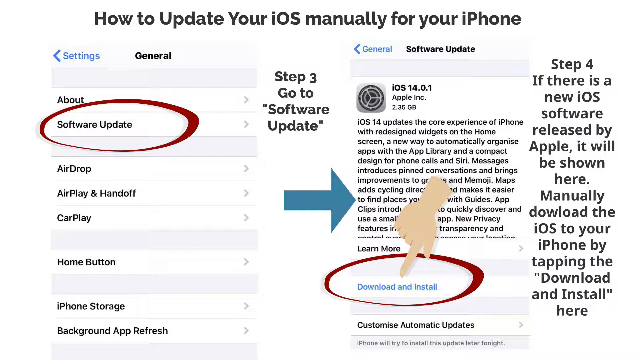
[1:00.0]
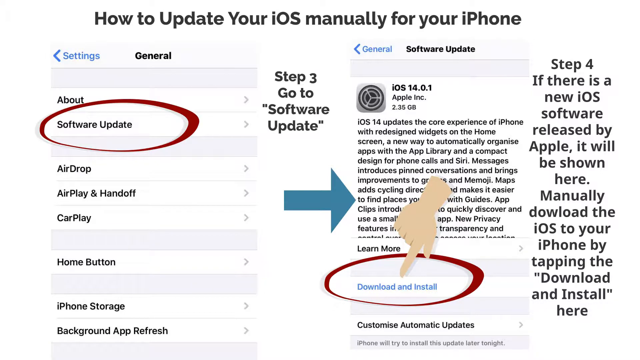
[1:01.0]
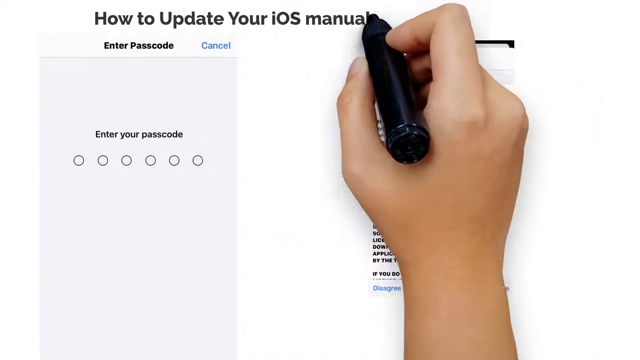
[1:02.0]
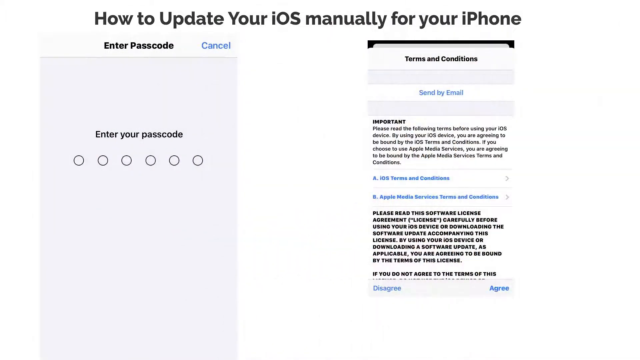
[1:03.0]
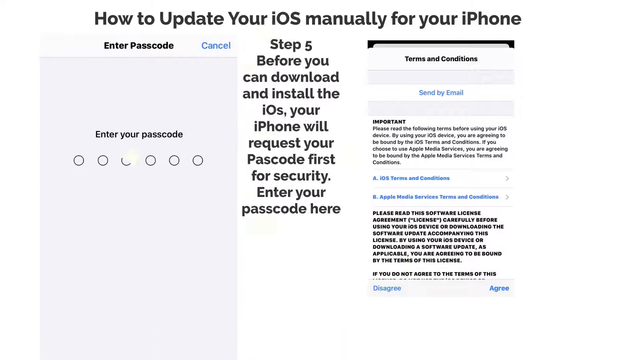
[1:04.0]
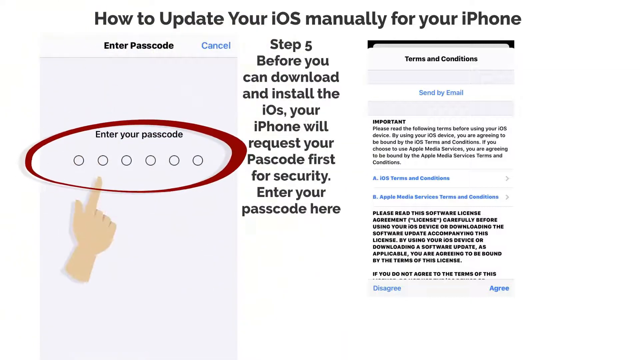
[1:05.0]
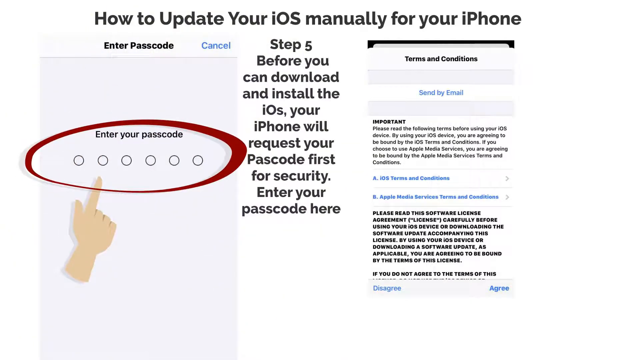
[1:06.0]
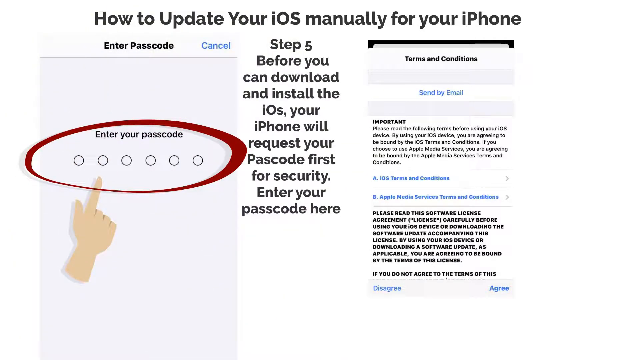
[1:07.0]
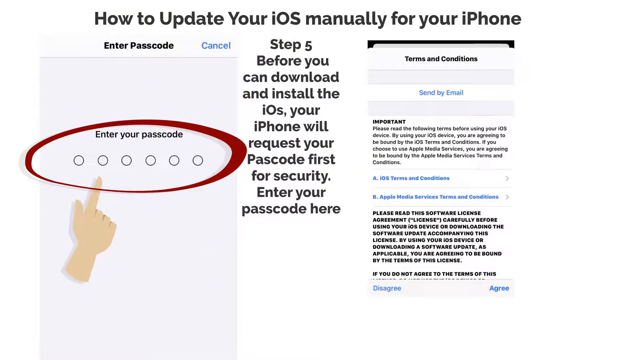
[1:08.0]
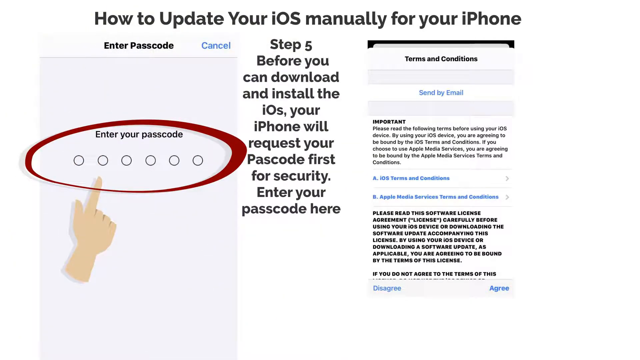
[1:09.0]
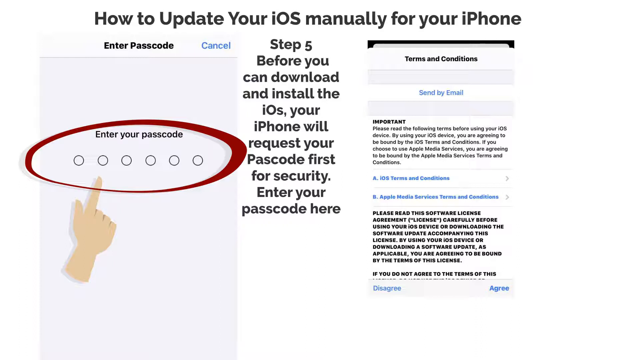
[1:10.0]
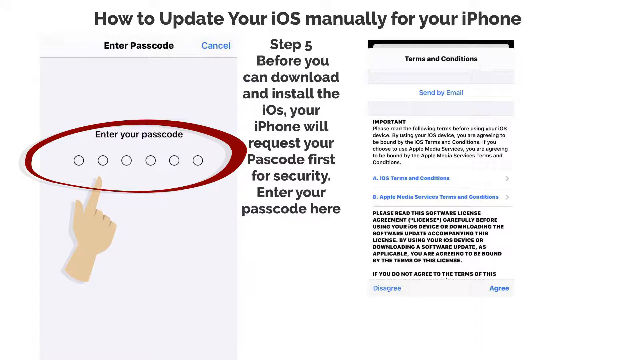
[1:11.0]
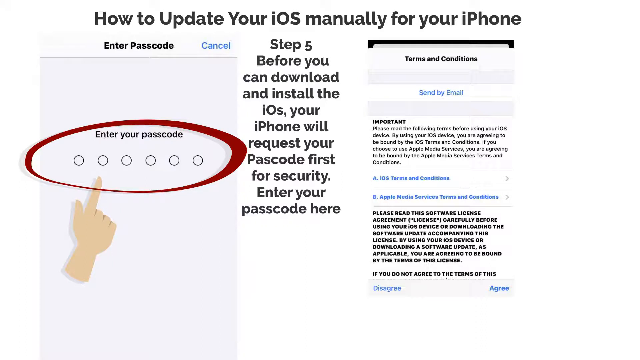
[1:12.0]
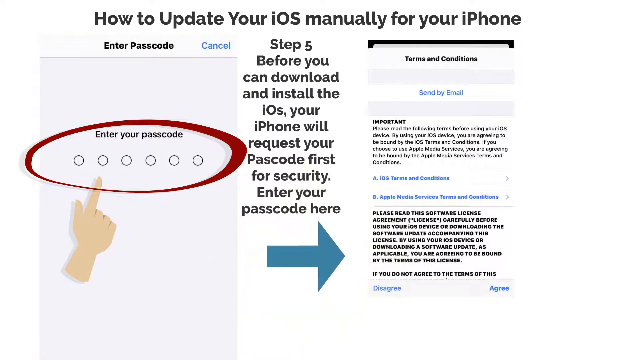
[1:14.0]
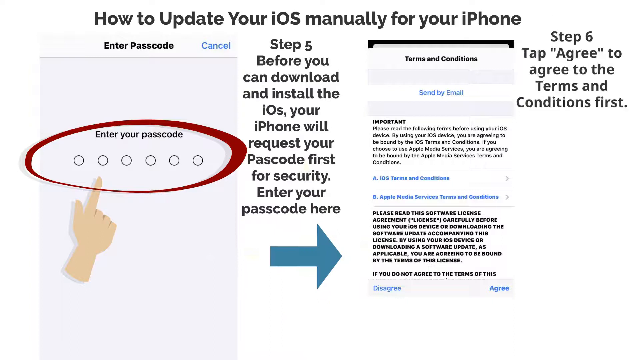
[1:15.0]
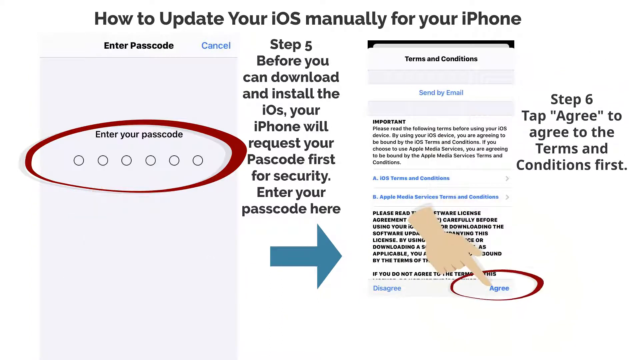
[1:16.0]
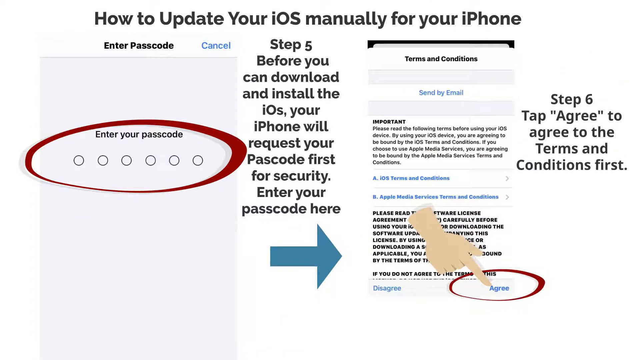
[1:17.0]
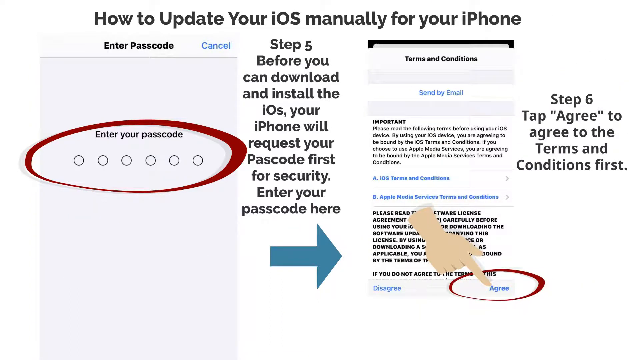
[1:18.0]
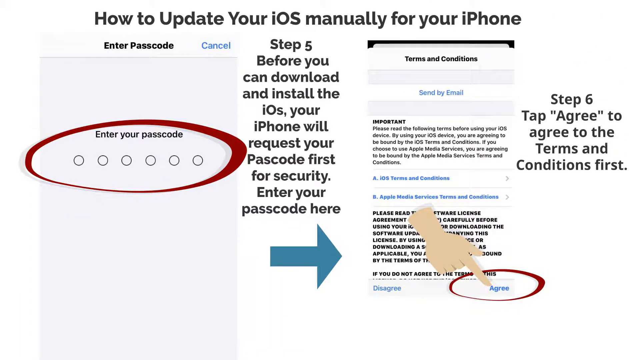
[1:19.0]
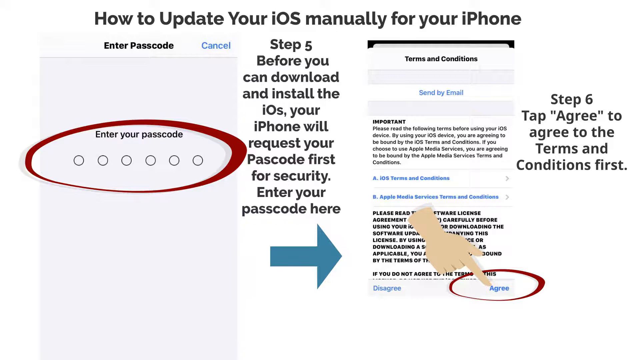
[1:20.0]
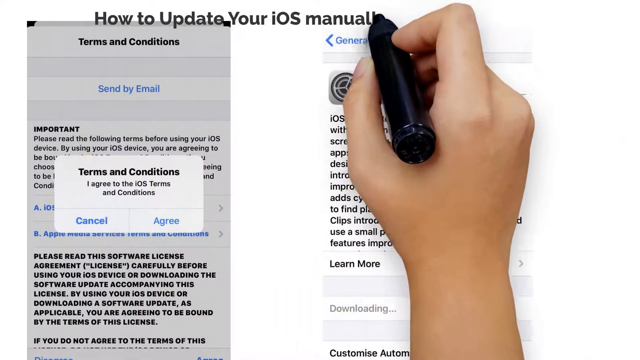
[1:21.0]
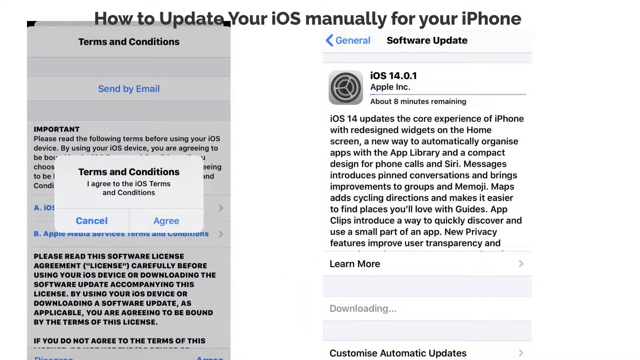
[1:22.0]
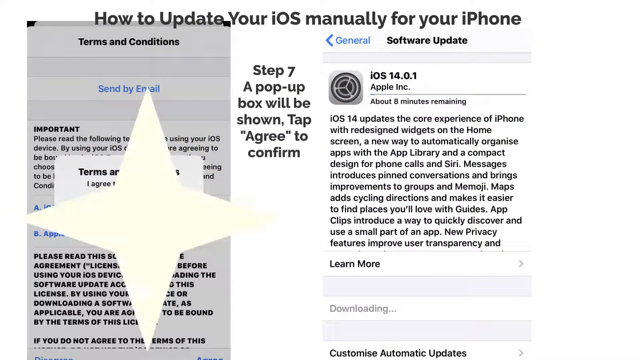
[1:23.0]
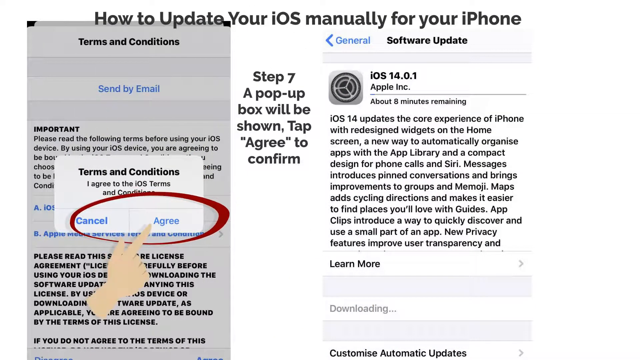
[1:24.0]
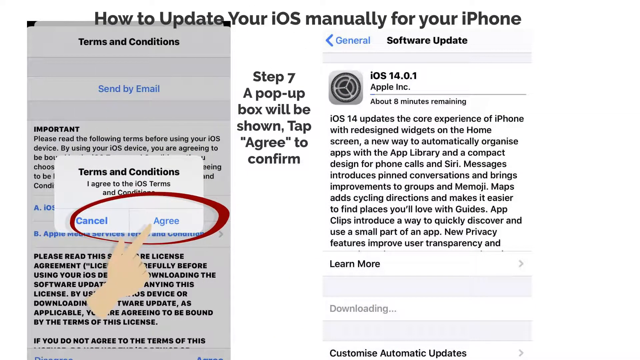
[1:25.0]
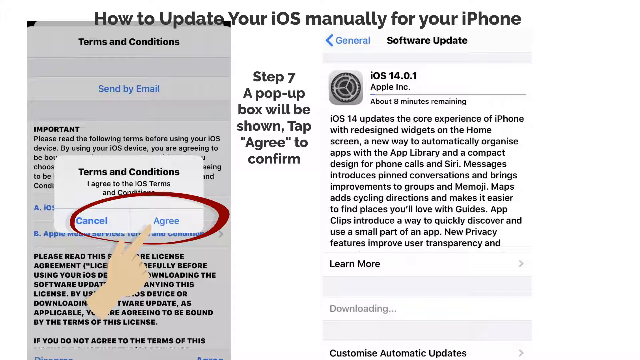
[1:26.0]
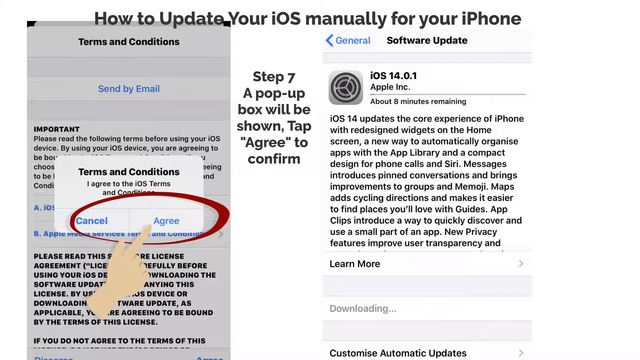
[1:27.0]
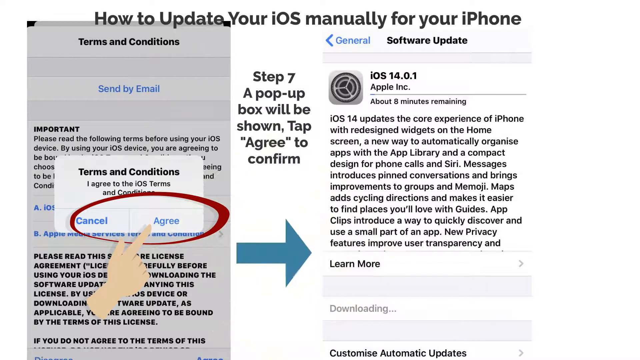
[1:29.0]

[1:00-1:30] A hand with a black pen writes in black over the white background: "how to update your iOS manually for your iPhone". On the left is a screen that looks like an iPhone screen titled "enter passcode", with a cancel option; below it, "enter your passcode" is highlighted by the red circle illustration, and the hand indicates the user needs to enter the six-digit passcode. In the center is step 5, with text reading "before you can load and install the iOS your iPhone will request your passcode first - for security enter your passcode here". On the right is a "terms and conditions" screen with an option to send the terms and conditions by mail, and below it the text "please read the following terms before using your iOS device", followed by other text too small to read. Below that are the iOS terms and conditions, then the Apple Media Services terms and conditions, another text in black, and two options, disagree and agree. The screen stays like this for a while, then a blue arrow appears from the enter passcode screen to the terms and conditions screen, and step 6 text appears saying the user needs to tap agree to the terms and conditions. The red circle illustration and the hand appear over the agree option. Another screen then shows a pop-up reading "I agree to the iOS terms and conditions", again with an Agree option; this is step 7 of the tutorial.